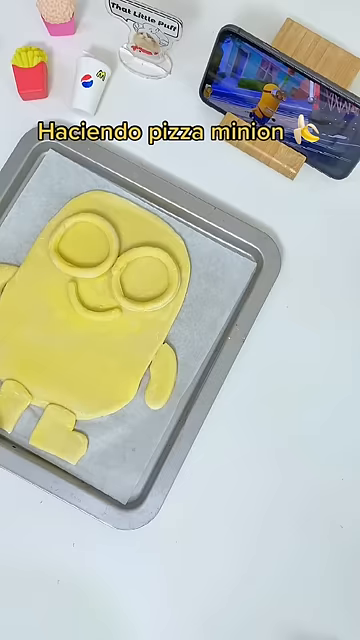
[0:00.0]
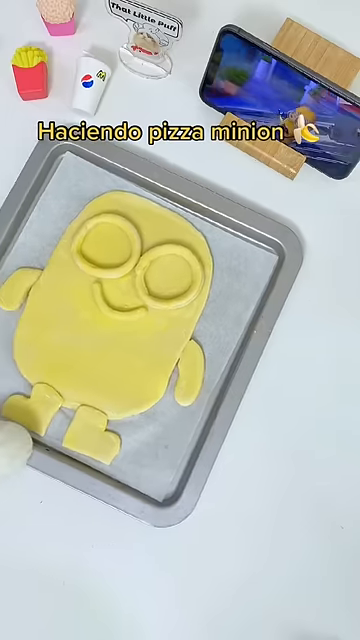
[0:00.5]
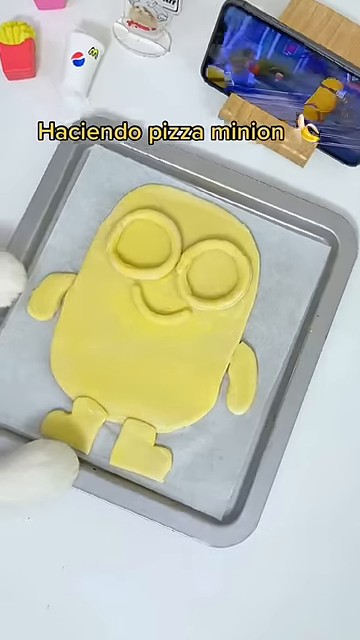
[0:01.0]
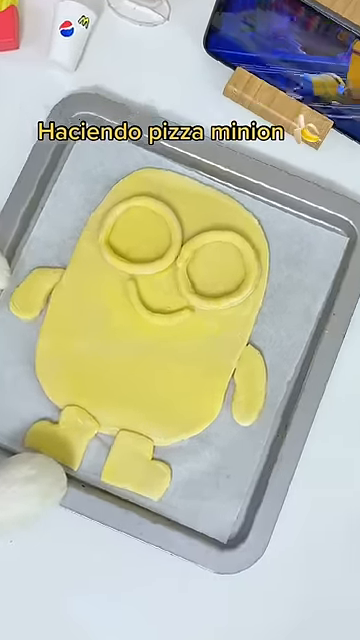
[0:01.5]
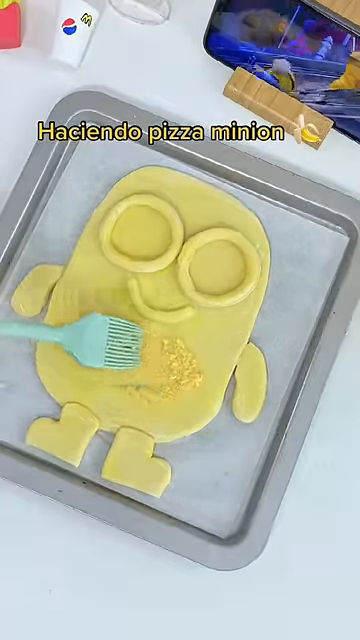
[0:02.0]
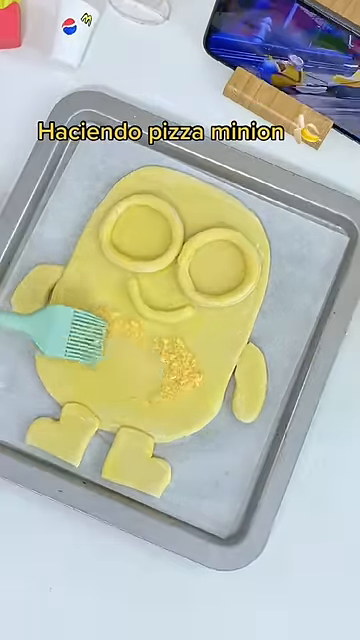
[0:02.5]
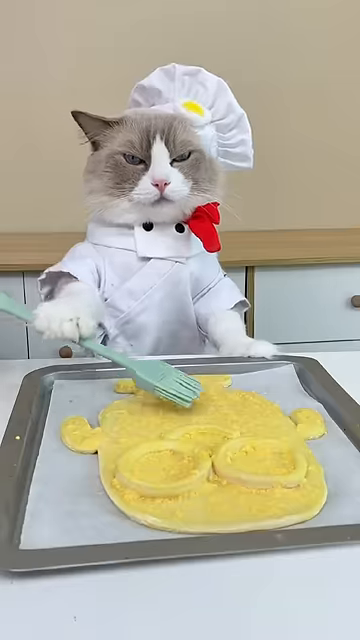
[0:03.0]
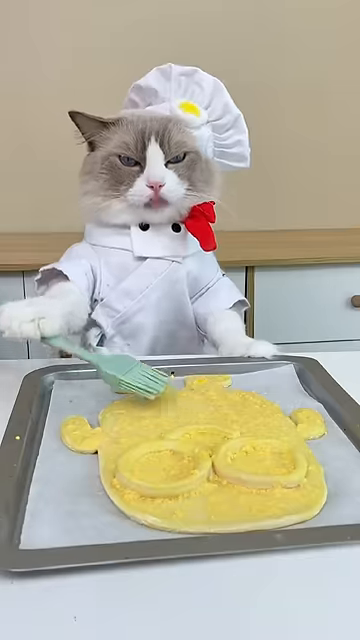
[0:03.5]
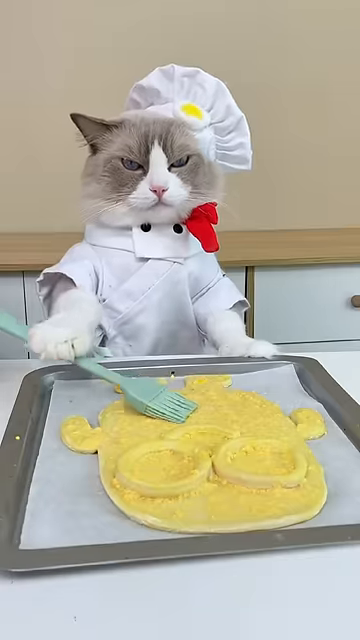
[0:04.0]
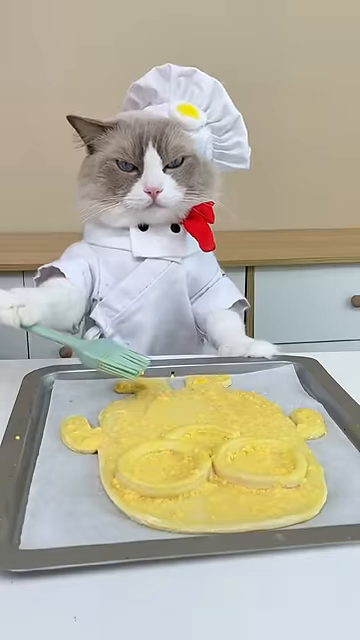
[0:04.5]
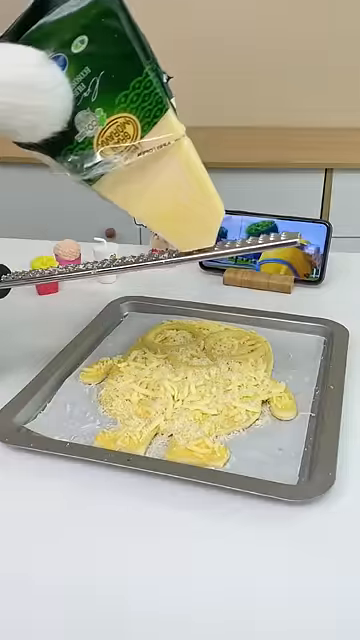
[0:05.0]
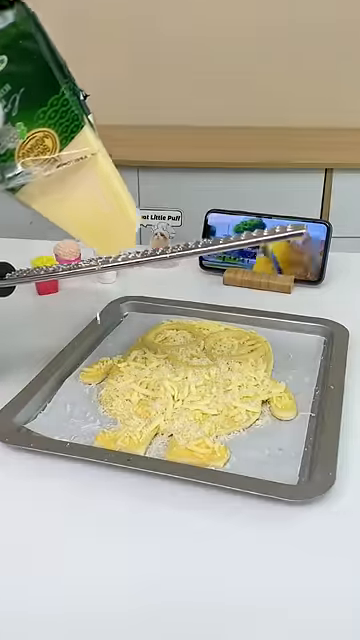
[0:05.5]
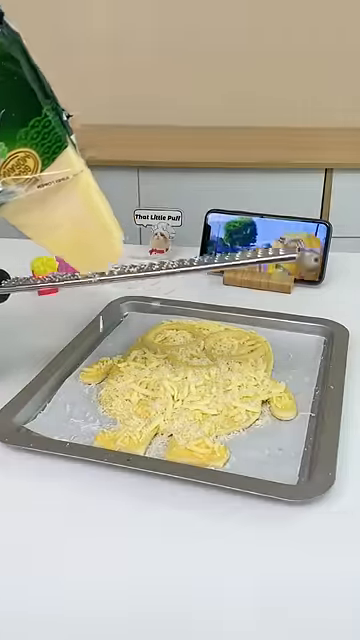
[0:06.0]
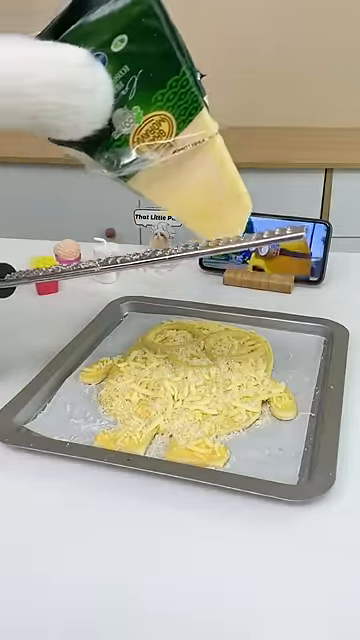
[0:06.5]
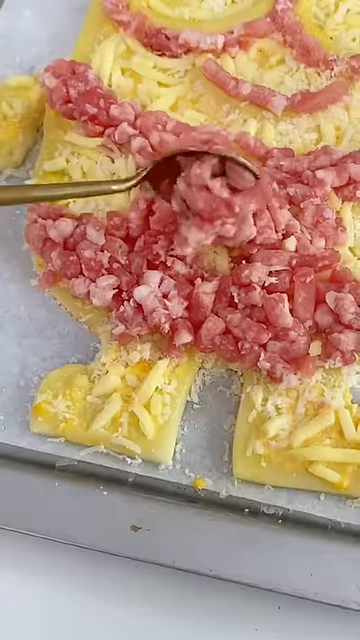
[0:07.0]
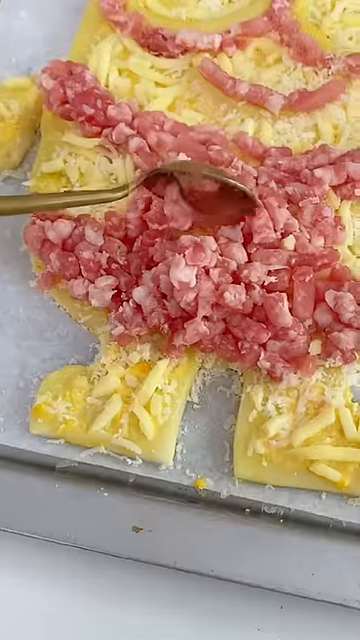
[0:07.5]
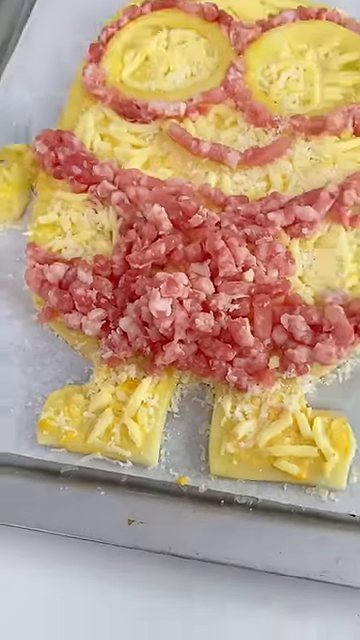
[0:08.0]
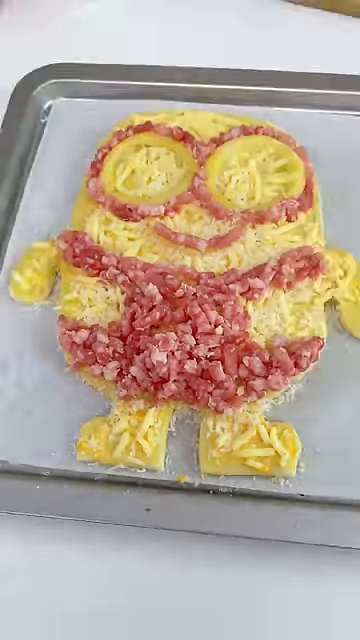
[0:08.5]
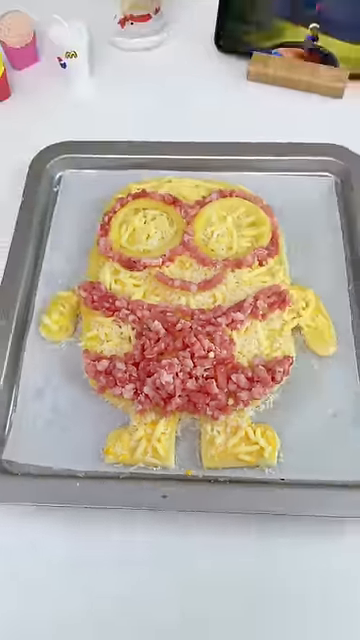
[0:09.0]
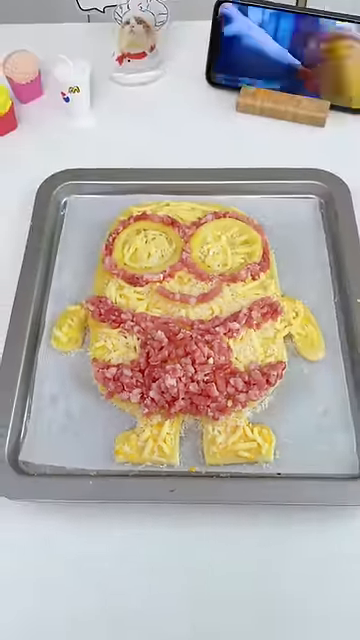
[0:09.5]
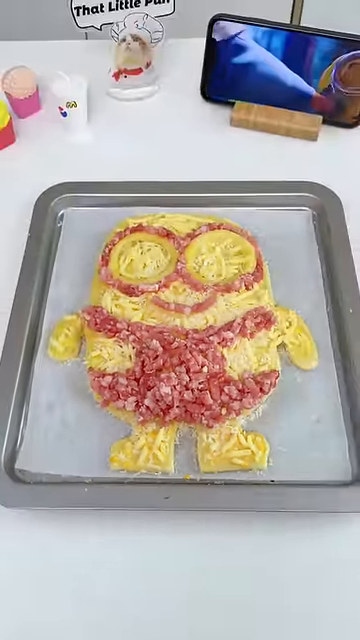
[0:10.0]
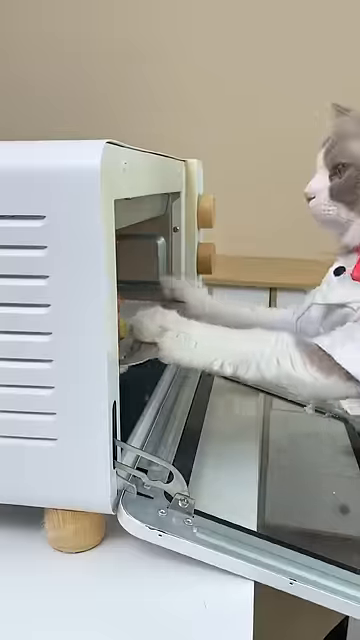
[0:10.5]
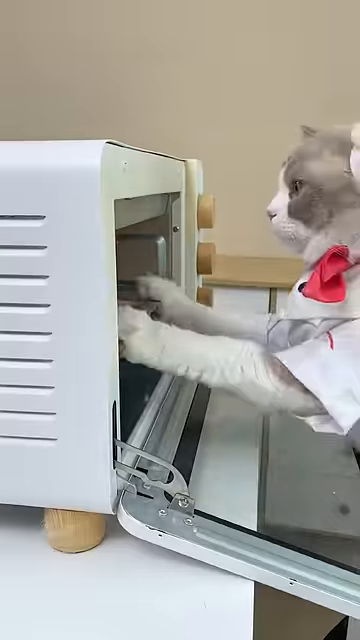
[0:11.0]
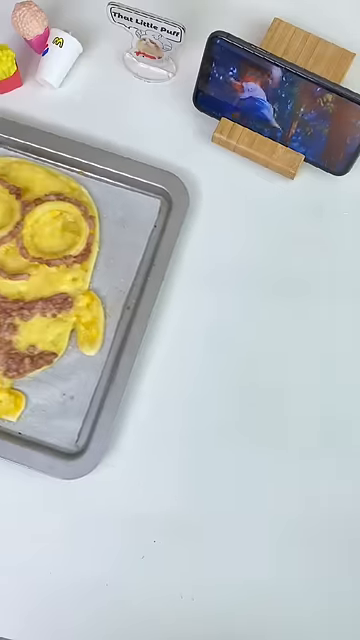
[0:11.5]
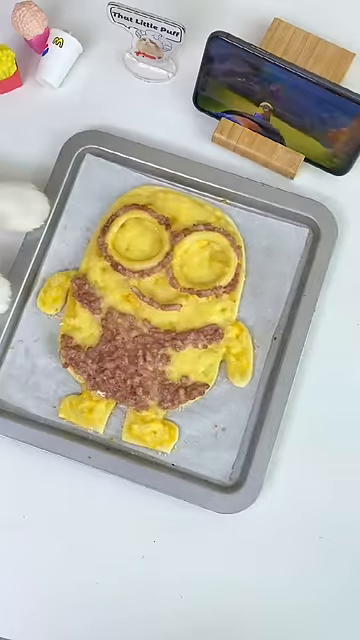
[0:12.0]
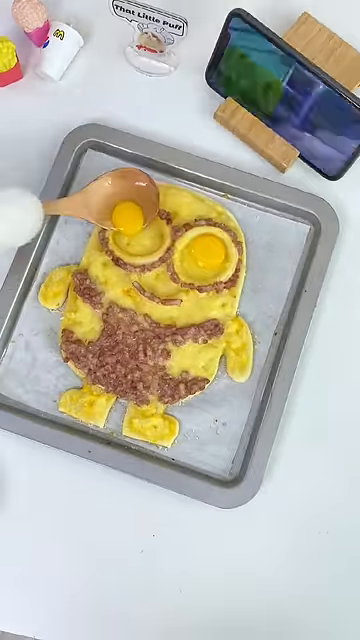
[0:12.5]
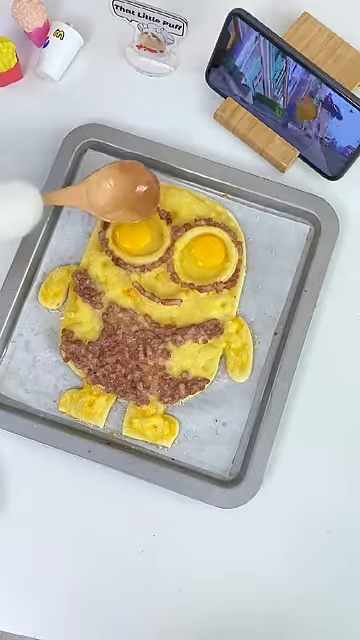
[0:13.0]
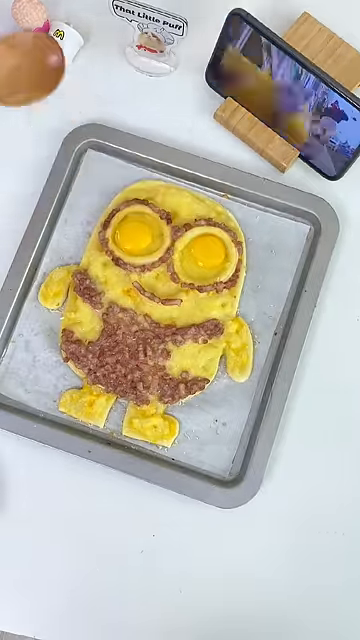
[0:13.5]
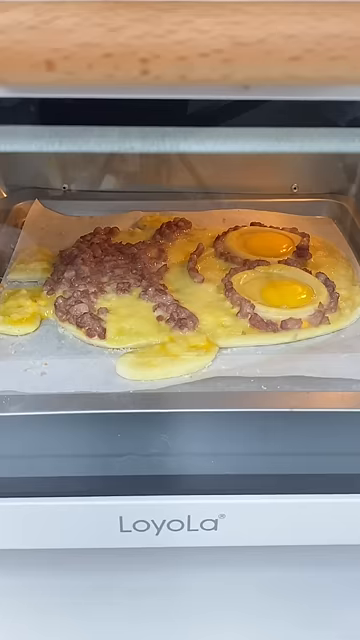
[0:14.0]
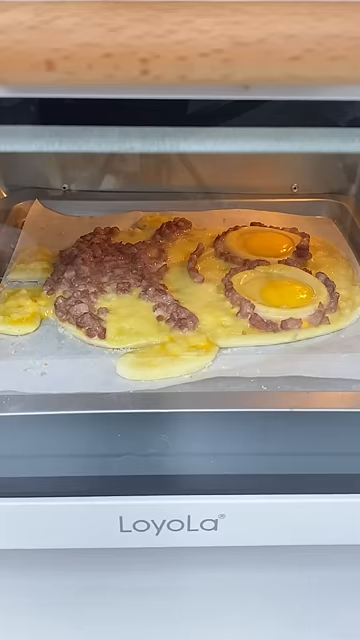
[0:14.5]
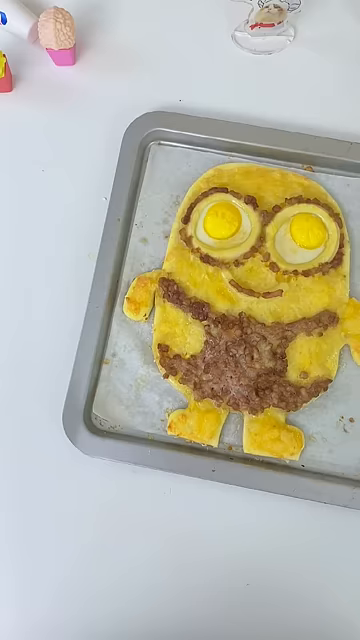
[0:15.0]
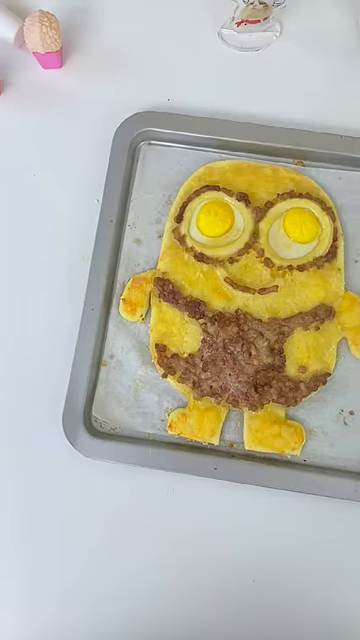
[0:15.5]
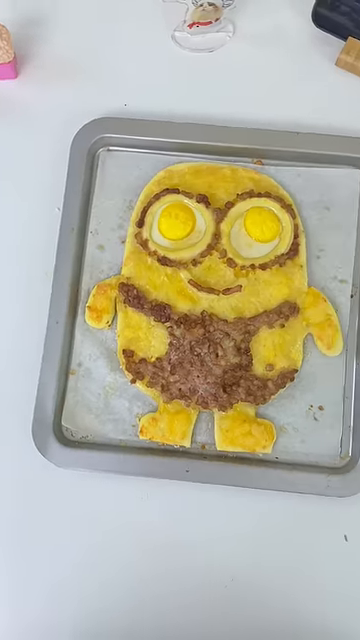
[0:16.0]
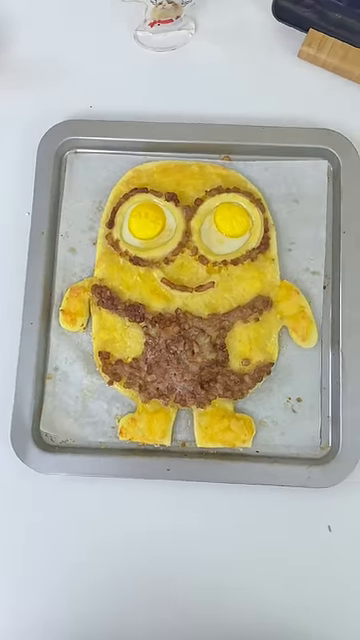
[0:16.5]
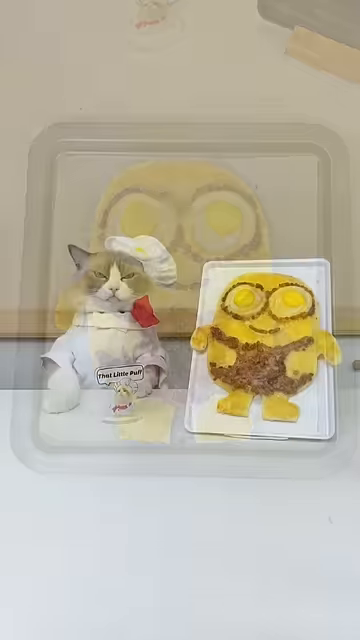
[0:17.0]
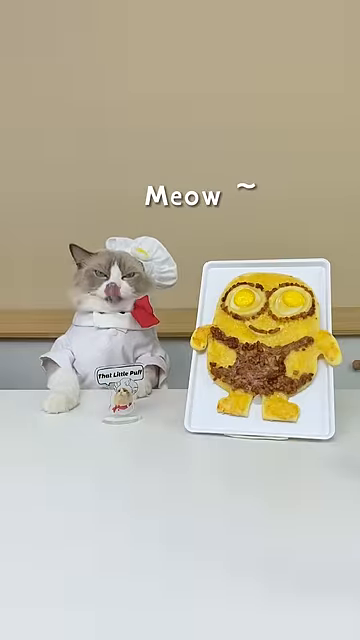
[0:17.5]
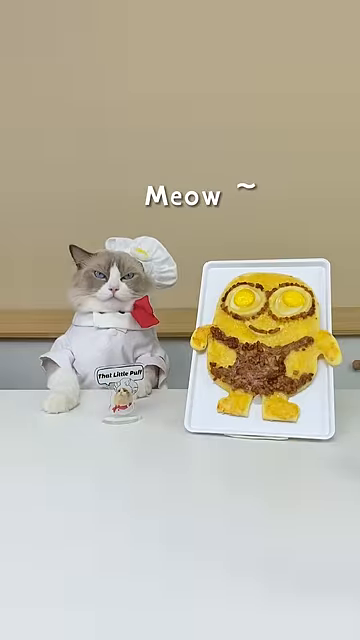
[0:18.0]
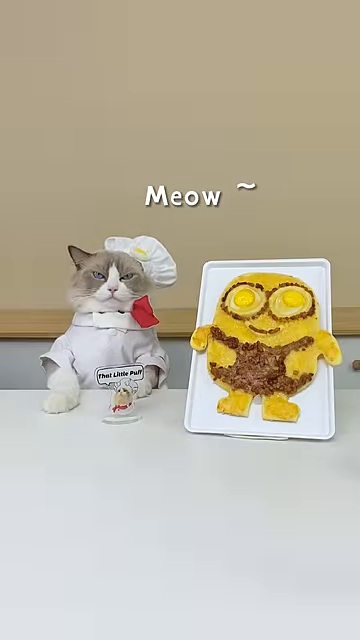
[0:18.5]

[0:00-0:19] A minion-shaped food is laying on a pan. It looks almost like a biscuit-type material, or maybe some kind of noodle-type material. A cat is making the minion the whole time. First the cat puts egg wash on it with a brush, and small glimpses of the cat's paw can be seen as it grates parmesan cheese over the minion, puts the meat on, and puts the eggs in. The minion is covered with parmesan cheese and has what looks like bacon bits forming its clothes and glasses. Two eggs are placed inside the glasses to make the eyes. At the very end, the cat is sitting next to the minion wearing little chef's clothing and a chef's hat, and the text says "meow."